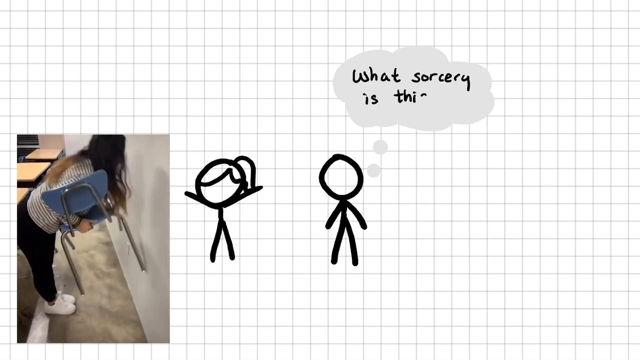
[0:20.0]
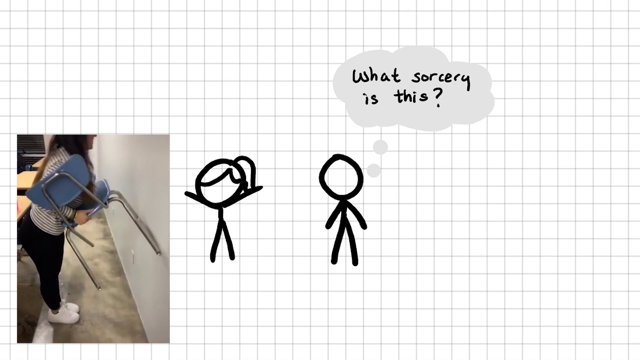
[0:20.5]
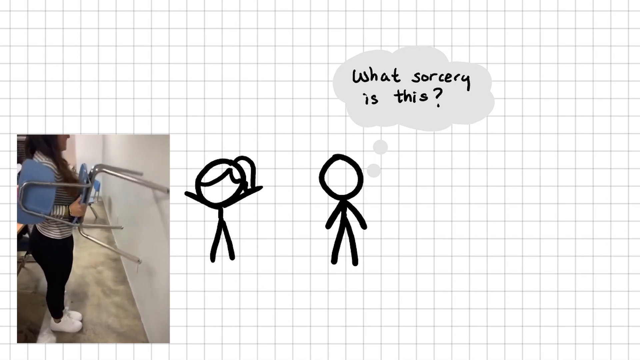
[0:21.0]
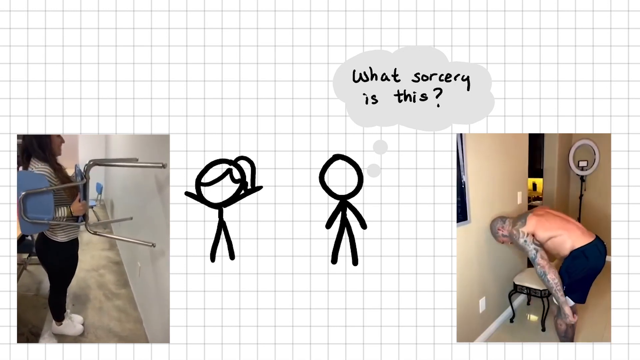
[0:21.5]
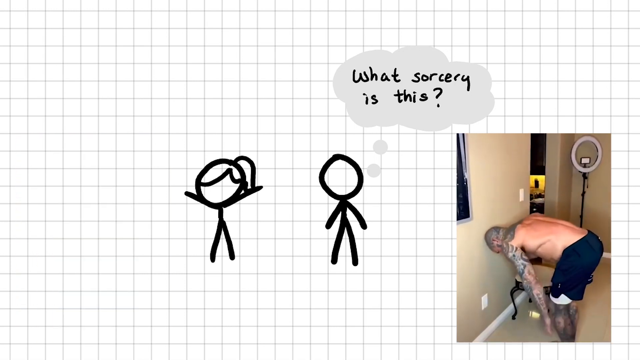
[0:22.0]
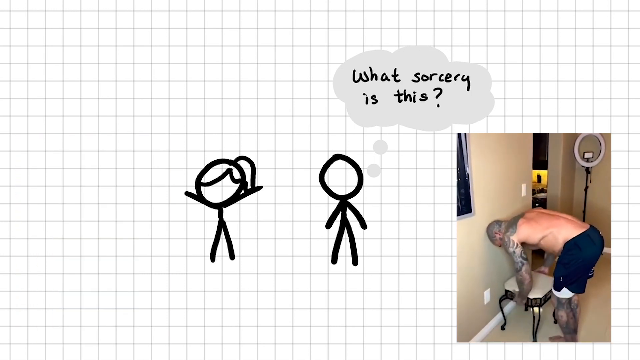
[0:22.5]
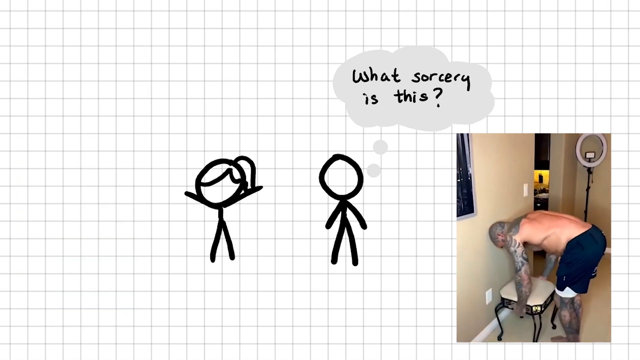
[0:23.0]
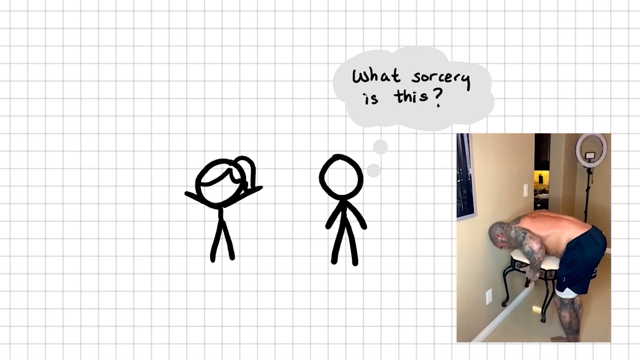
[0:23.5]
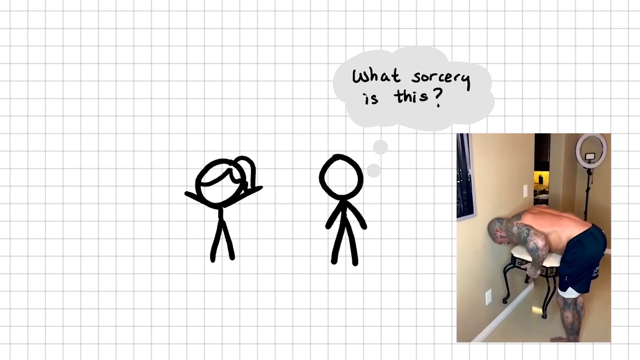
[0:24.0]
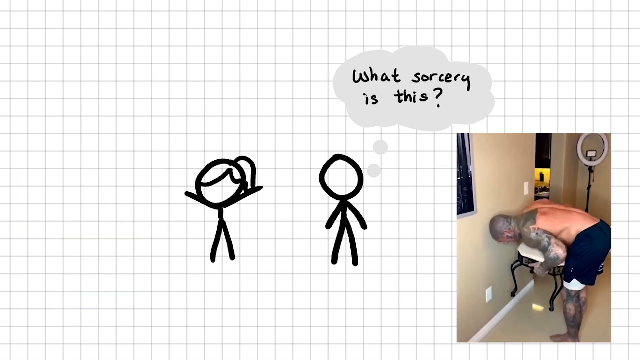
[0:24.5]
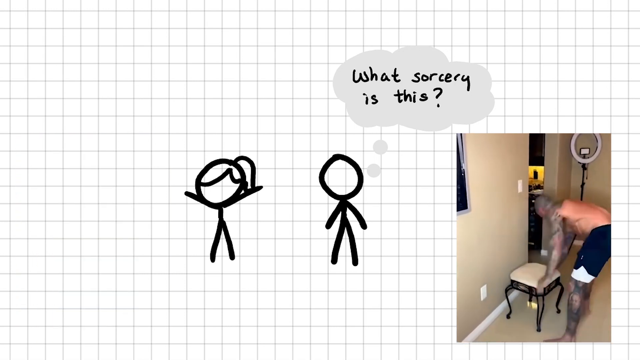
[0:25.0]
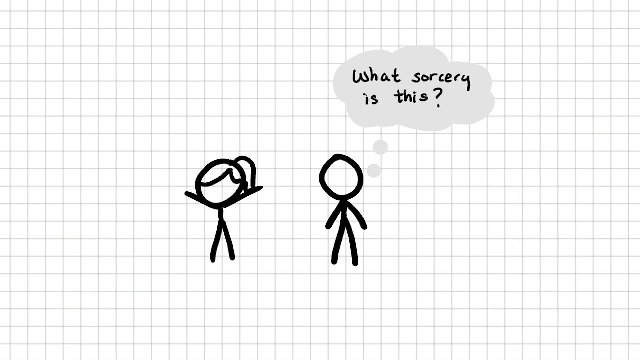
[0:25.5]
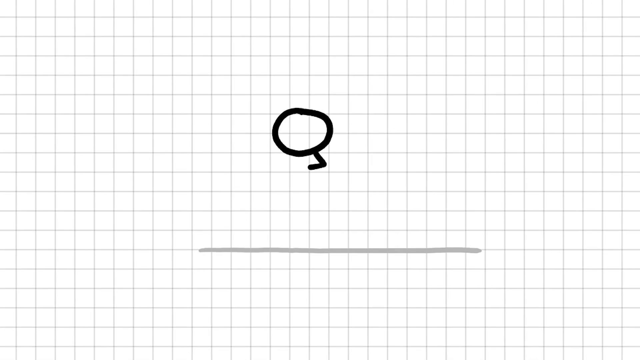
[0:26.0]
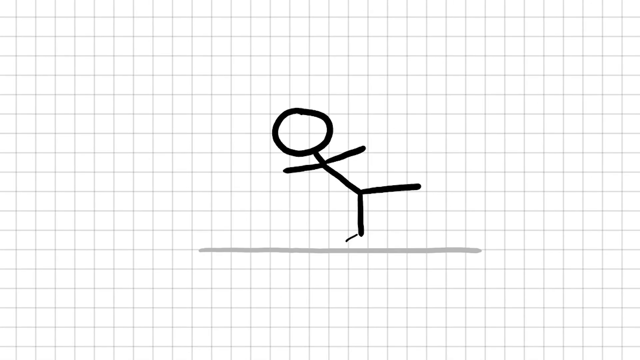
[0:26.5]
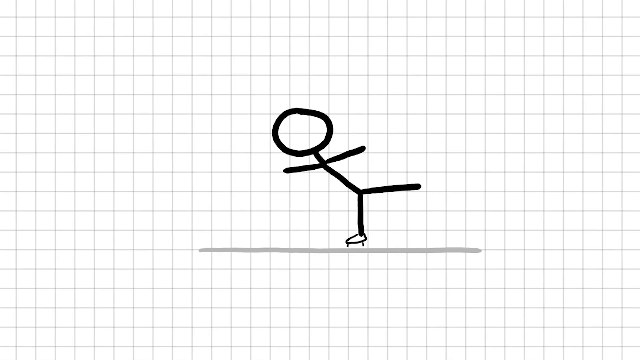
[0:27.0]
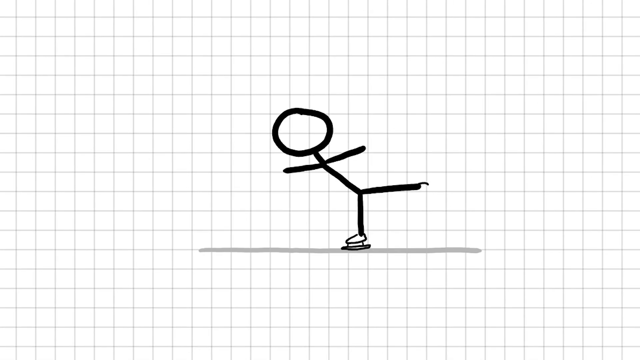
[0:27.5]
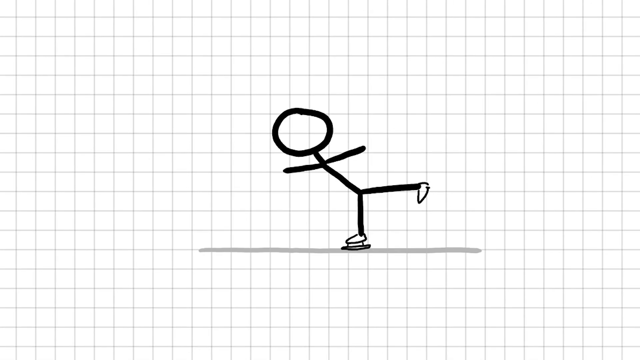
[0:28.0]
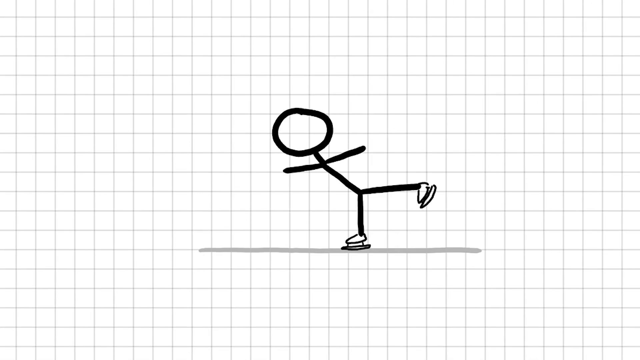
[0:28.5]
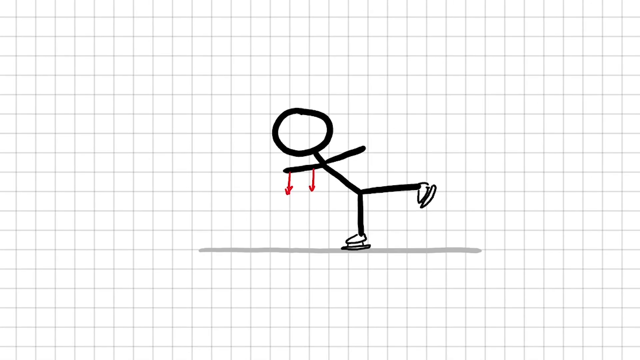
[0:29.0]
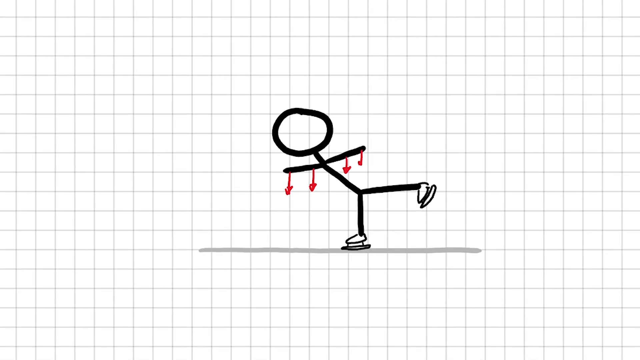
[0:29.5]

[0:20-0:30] A woman lifts up furniture; she is standing, and her posture appears to be bent. Another part shows a man shifting and lifting up furniture. Two characters, a female and a male character, appear with red rings and the text "what sorcery is this?", which seems to come from the male character. A tattooed white man lifting up furniture is shown with ring lights on the other side of the apartment, and he seems to walk away from the furniture. The shot ends with the same woman lifting up the chair, and the two characters are still in the same position as earlier.